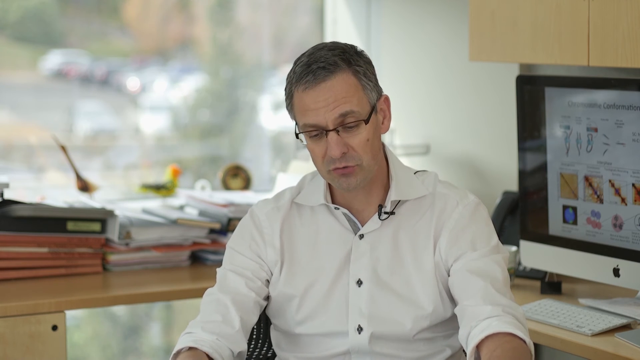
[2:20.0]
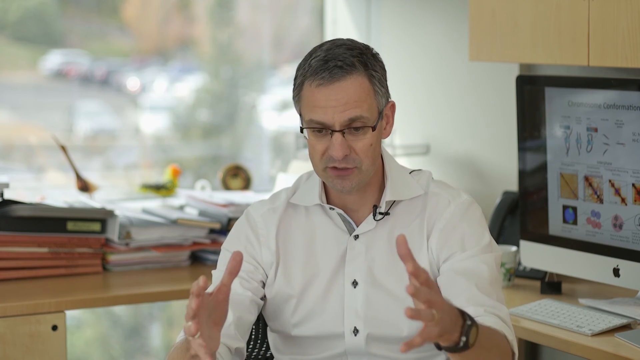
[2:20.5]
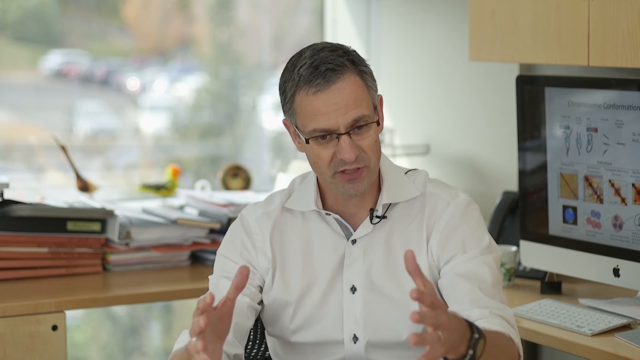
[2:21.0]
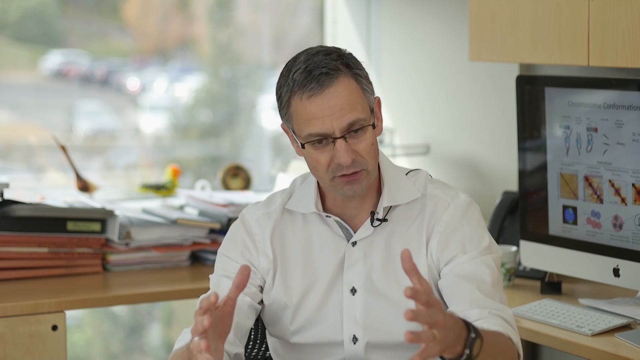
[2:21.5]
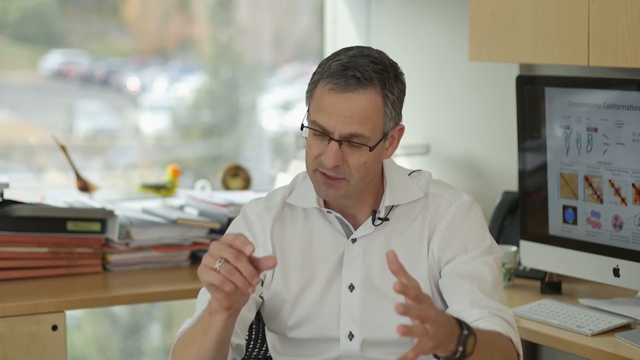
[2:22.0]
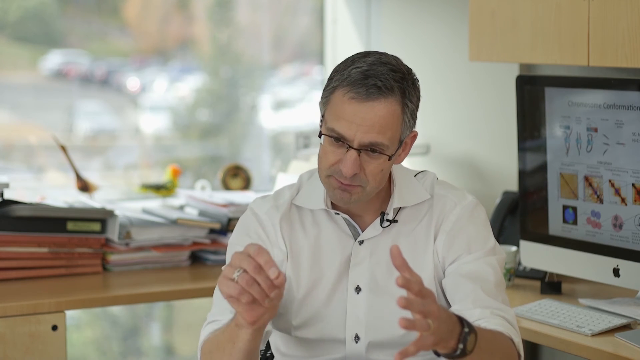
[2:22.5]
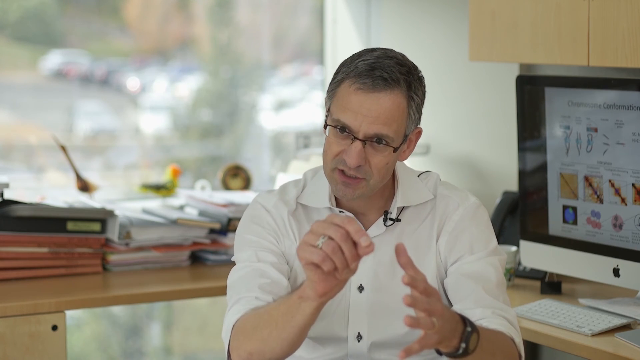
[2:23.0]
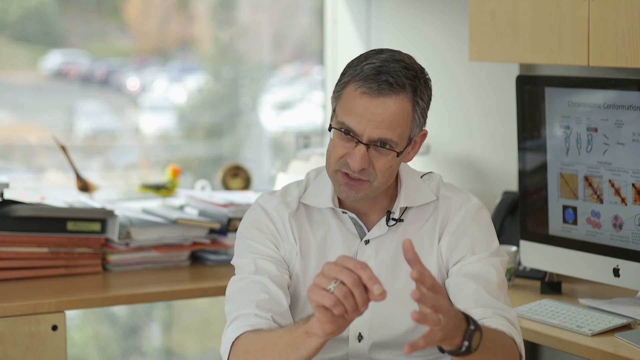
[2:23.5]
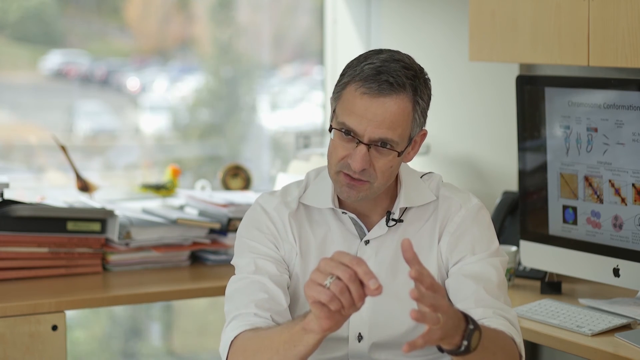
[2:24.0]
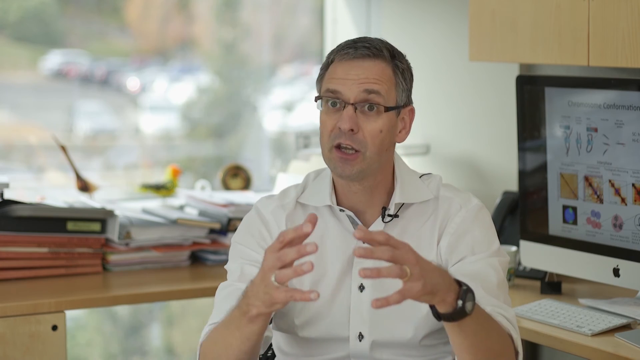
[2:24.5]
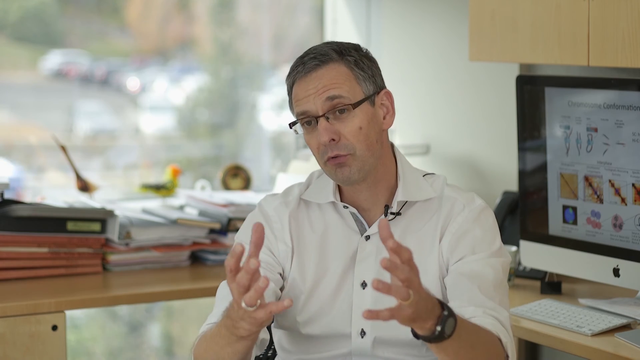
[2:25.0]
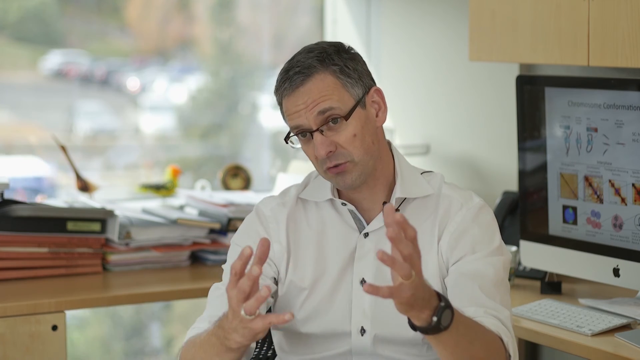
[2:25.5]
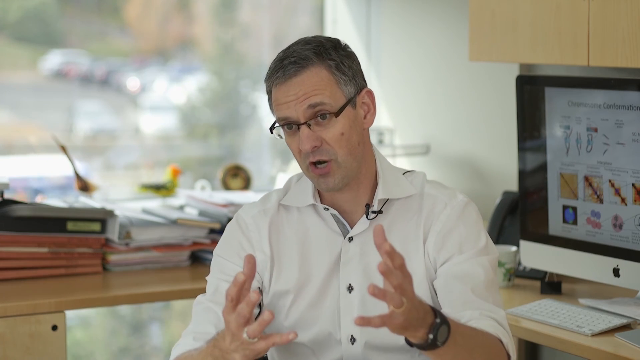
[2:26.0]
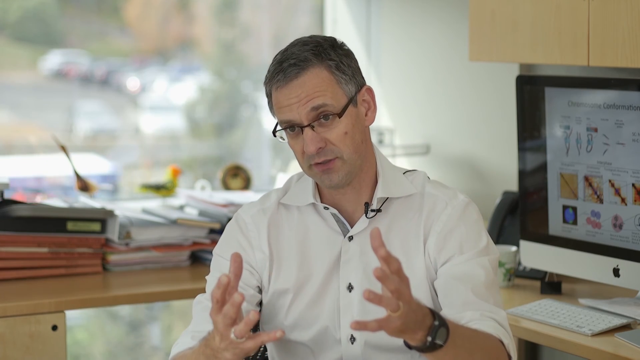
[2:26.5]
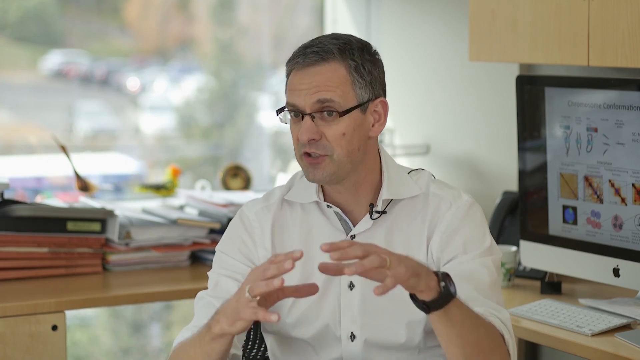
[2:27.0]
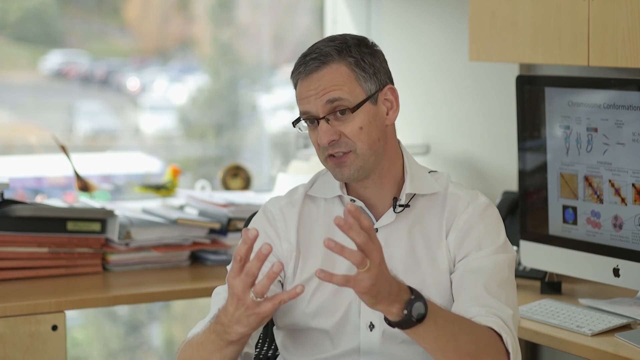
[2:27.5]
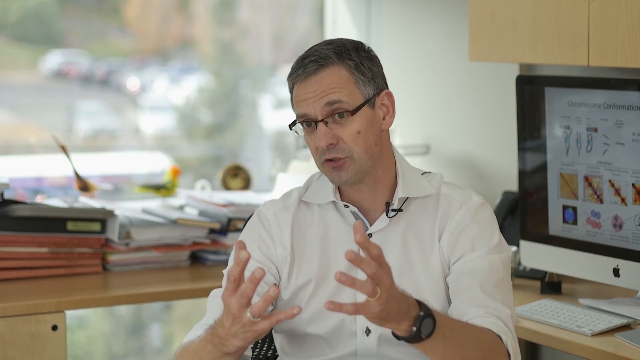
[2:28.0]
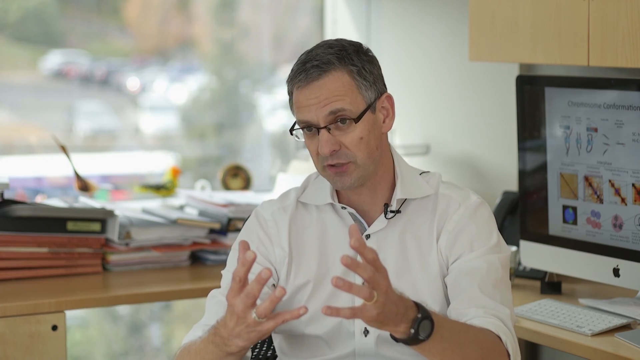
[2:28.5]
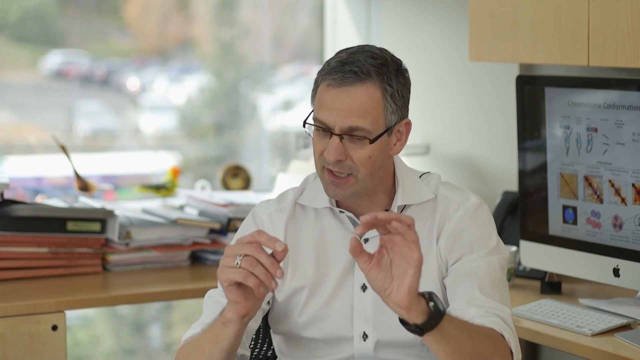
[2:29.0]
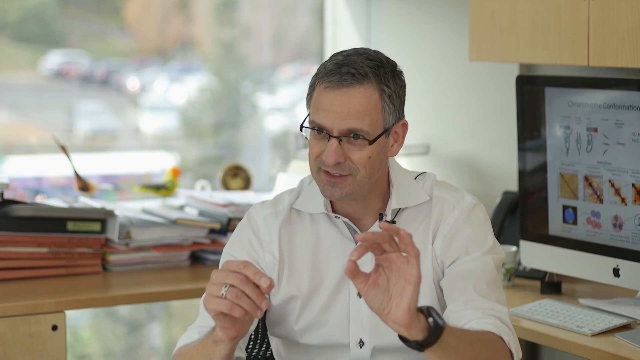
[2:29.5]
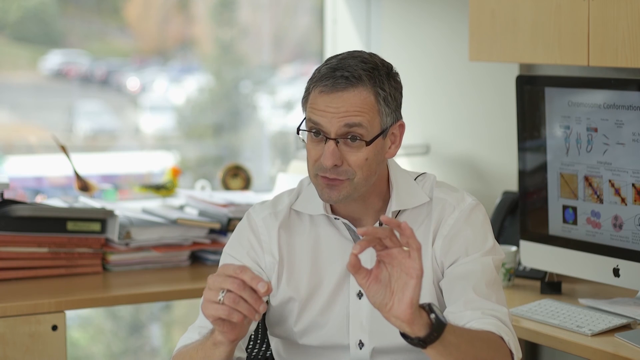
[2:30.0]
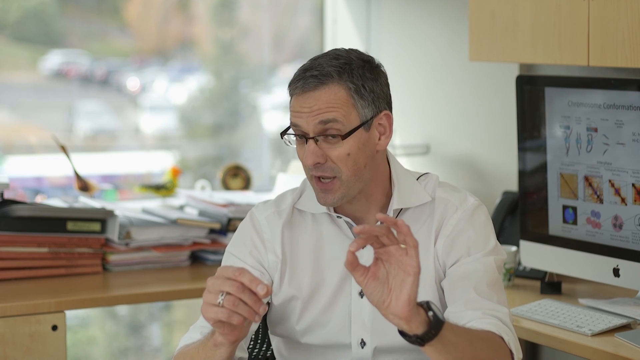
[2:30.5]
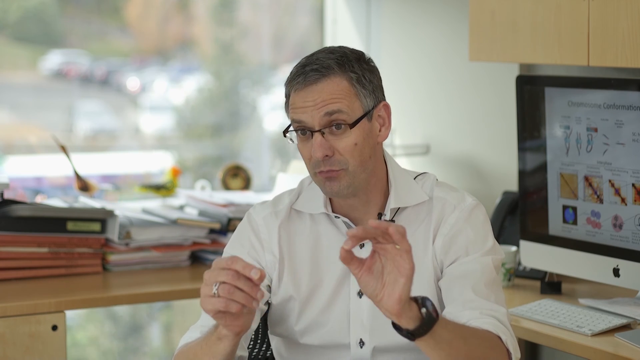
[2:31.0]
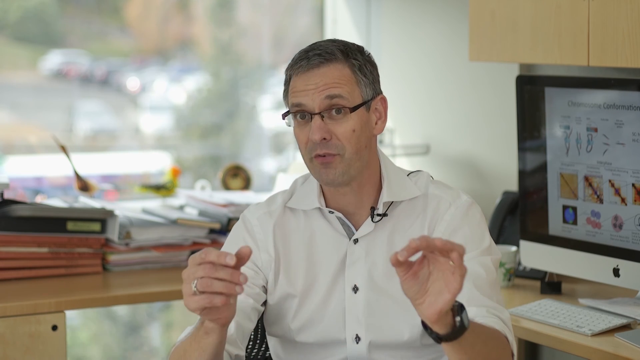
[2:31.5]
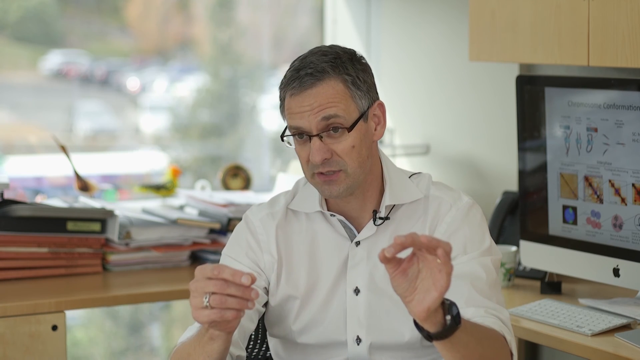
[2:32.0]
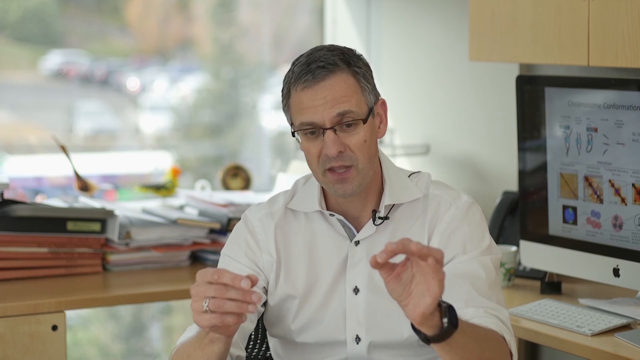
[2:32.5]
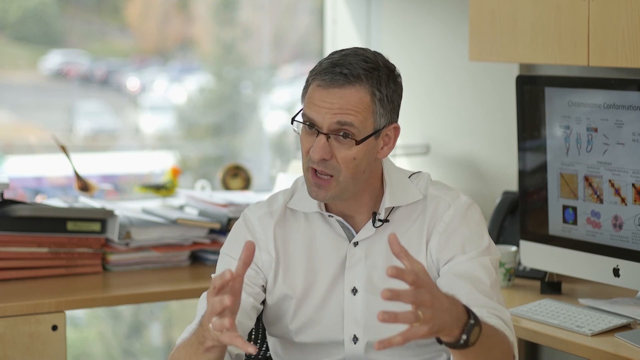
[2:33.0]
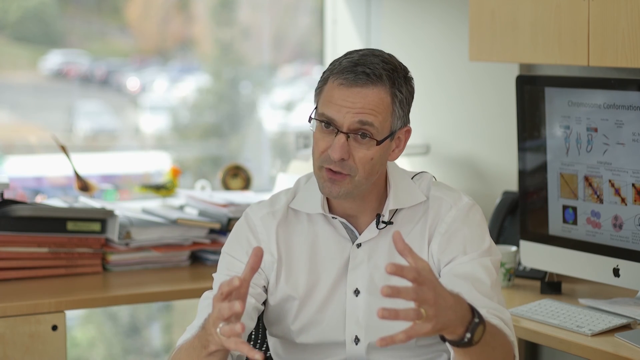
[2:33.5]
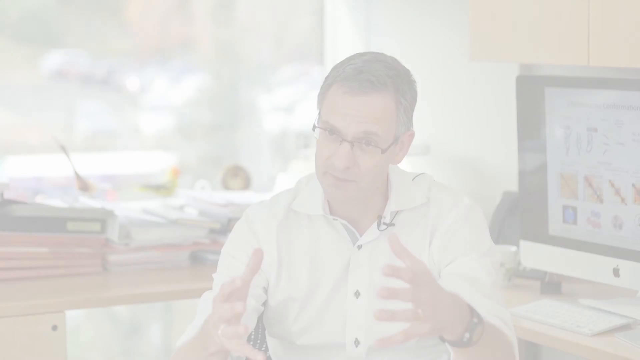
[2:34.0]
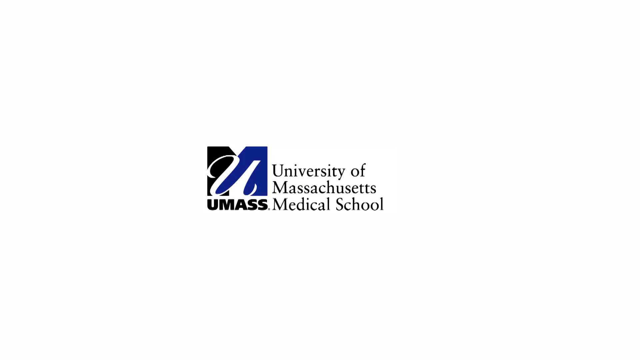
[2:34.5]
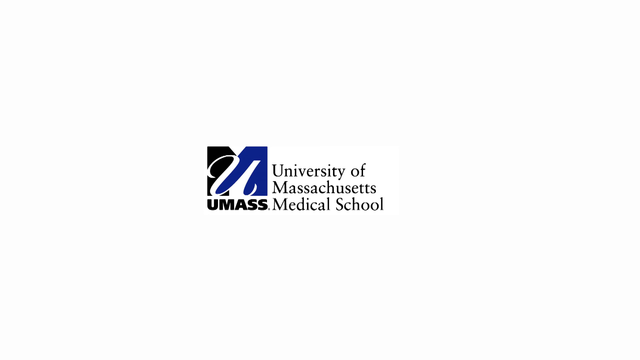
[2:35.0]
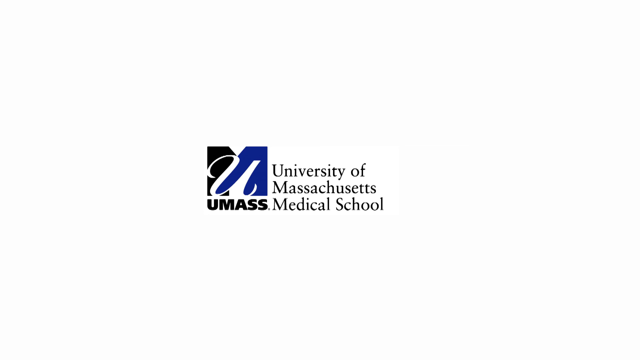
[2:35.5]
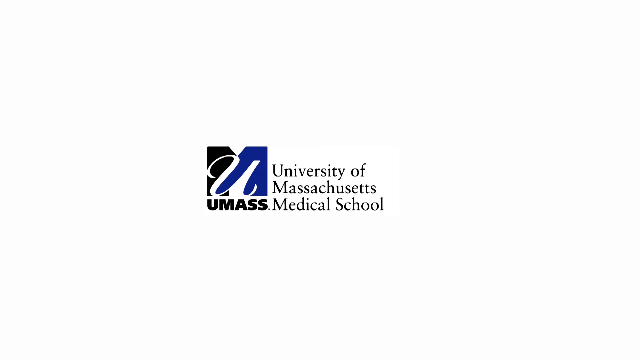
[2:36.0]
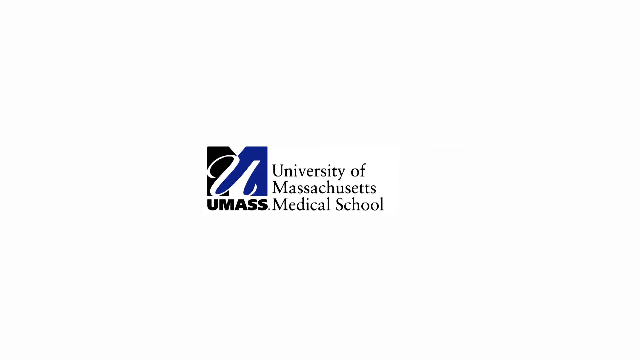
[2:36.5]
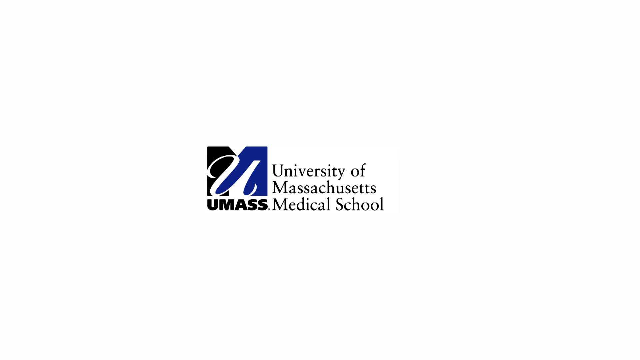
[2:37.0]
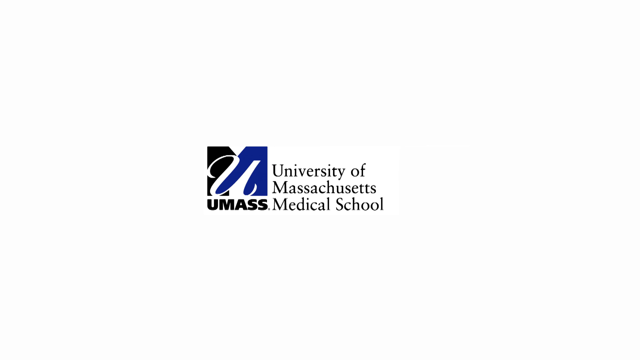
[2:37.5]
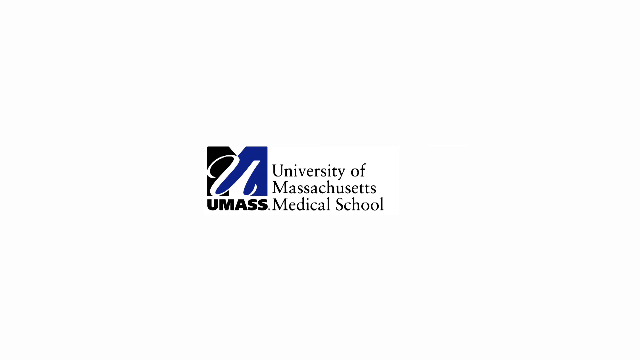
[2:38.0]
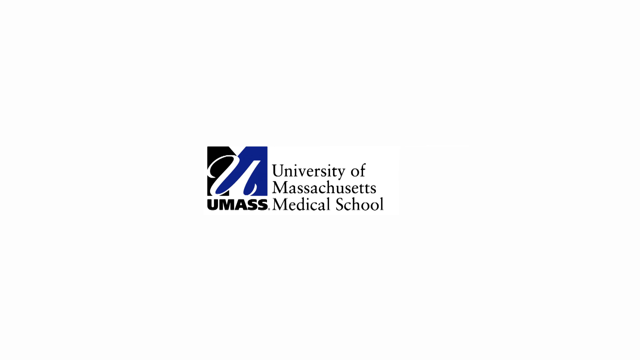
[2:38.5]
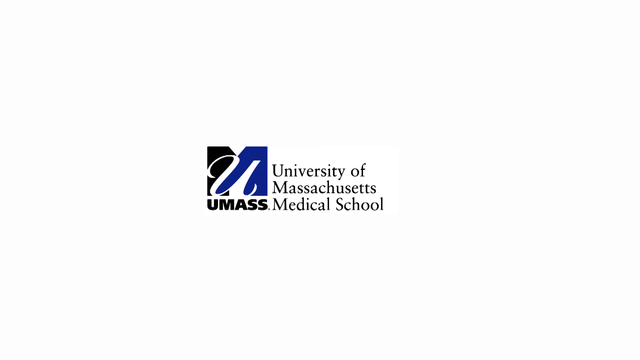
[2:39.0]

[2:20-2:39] The man is sitting at a desk in an office, wearing a white shirt with a black microphone at the collar, glasses, a wedding ring and a black watch. Some science material is on the monitor of his Apple desktop computer. Through the window, sunlight stands out, and there is what looks like a big parking lot with trees in the distance. He talks a lot with his hands. At the end, the screen shows text reading approximately "University of Massachusetts Medical School".